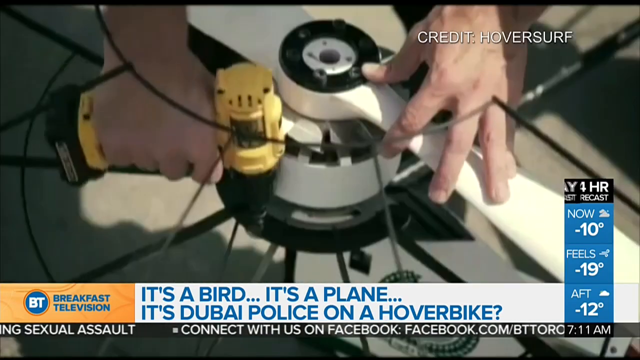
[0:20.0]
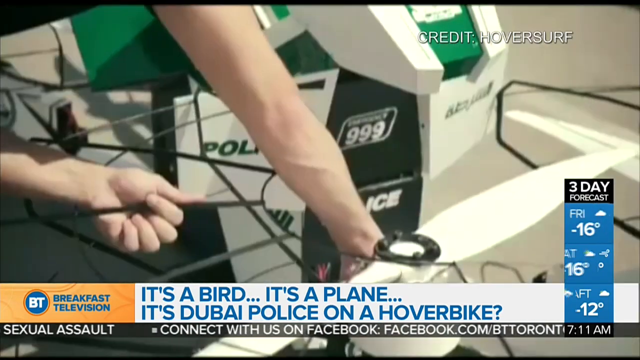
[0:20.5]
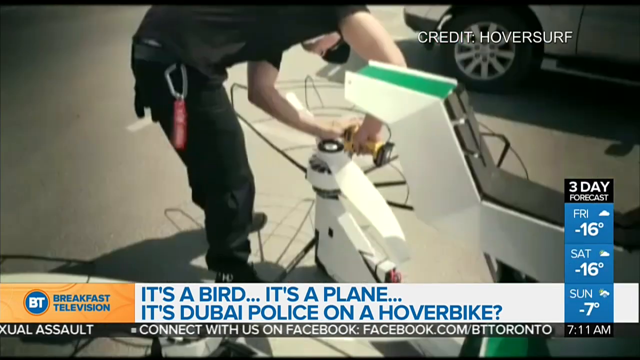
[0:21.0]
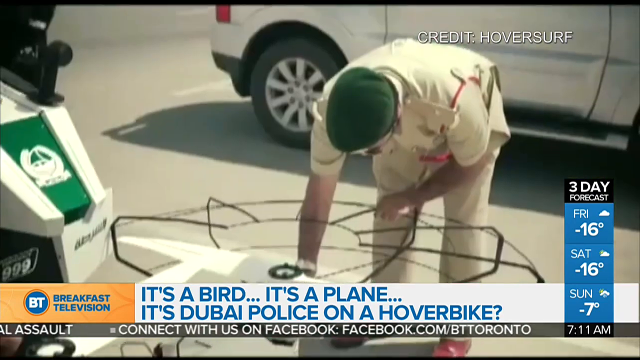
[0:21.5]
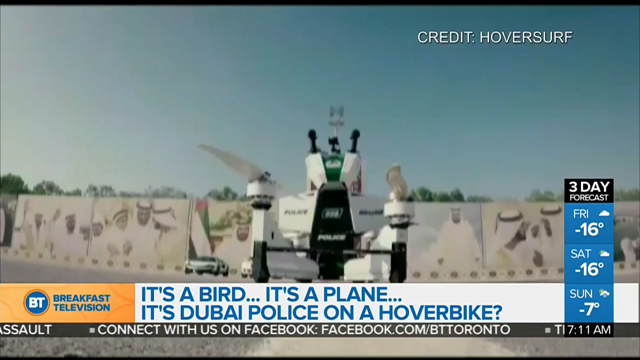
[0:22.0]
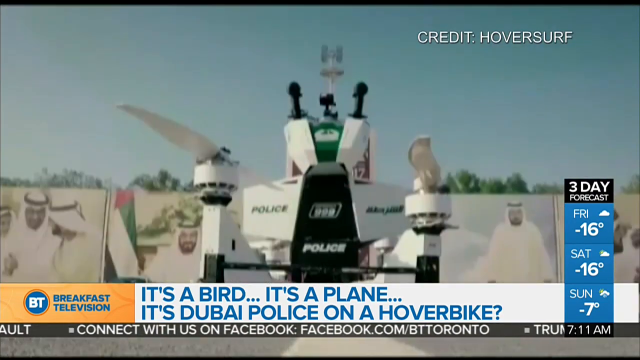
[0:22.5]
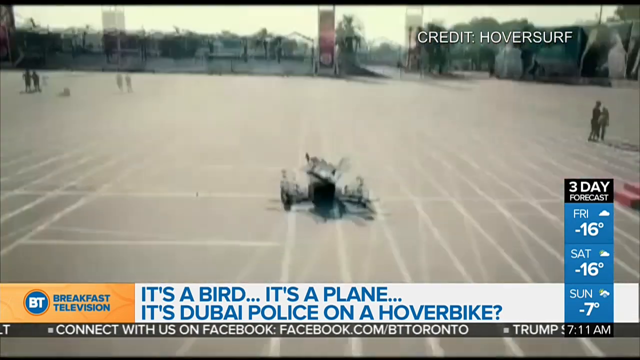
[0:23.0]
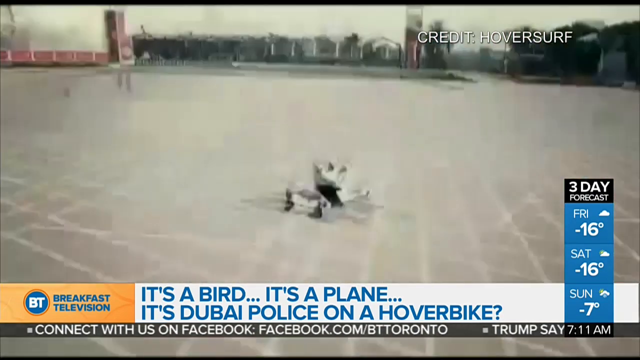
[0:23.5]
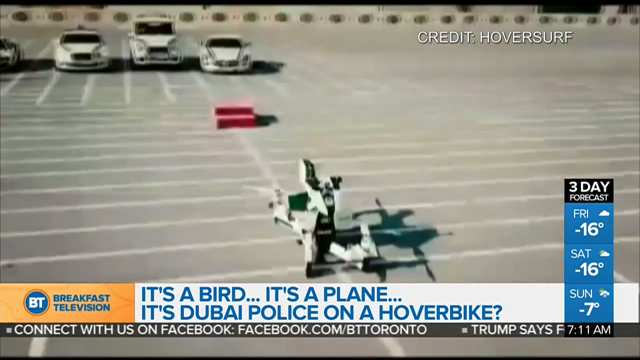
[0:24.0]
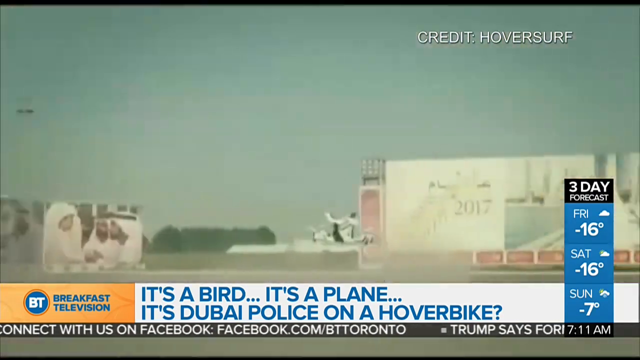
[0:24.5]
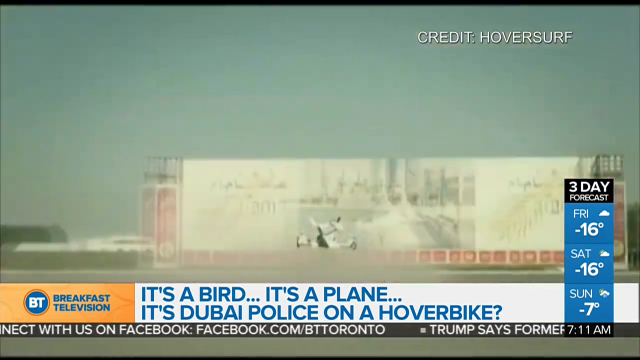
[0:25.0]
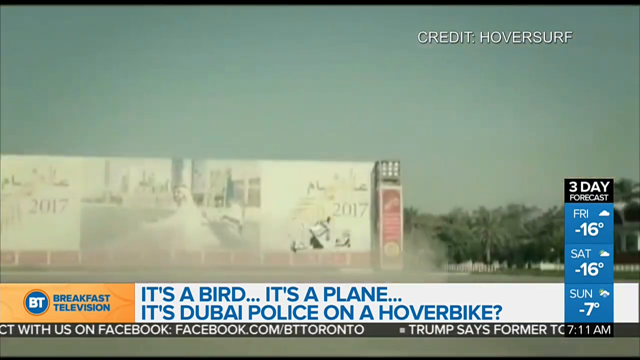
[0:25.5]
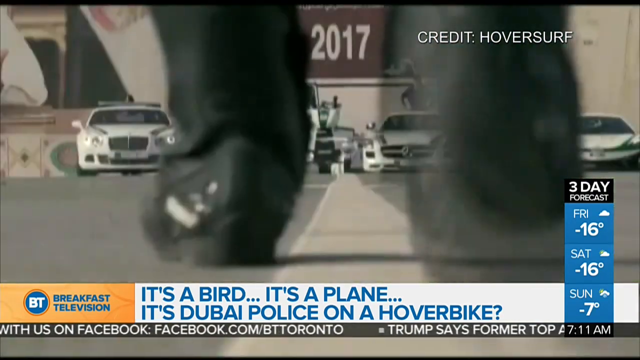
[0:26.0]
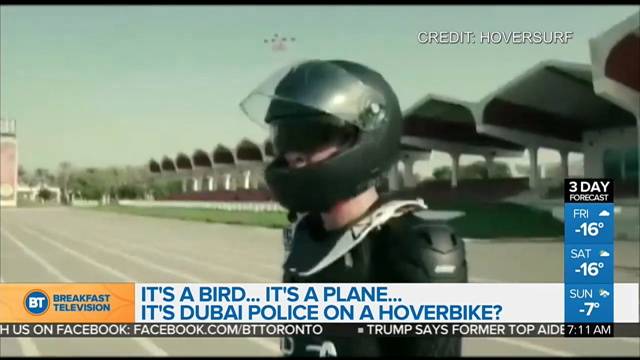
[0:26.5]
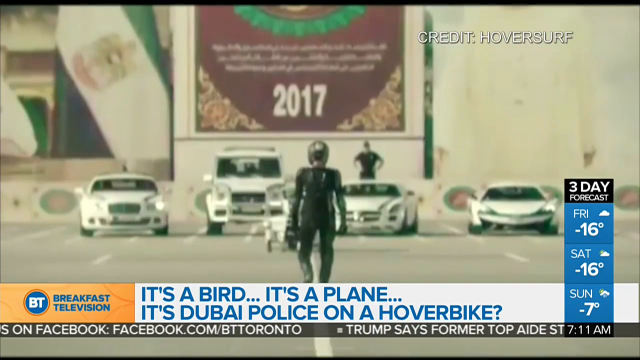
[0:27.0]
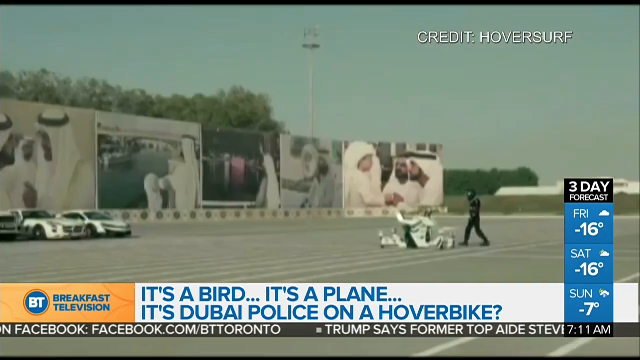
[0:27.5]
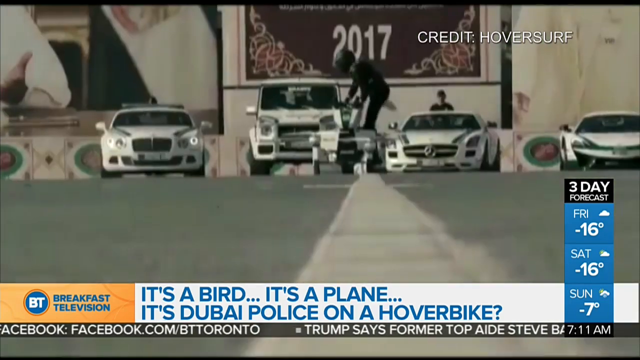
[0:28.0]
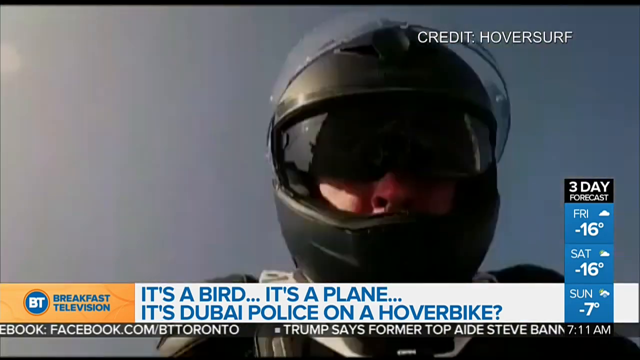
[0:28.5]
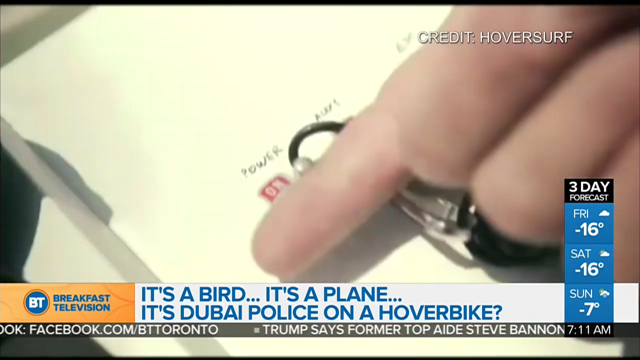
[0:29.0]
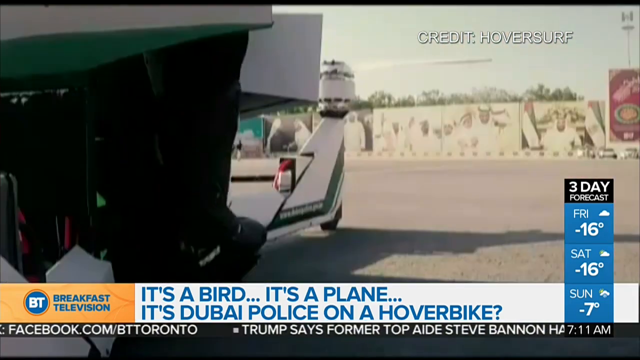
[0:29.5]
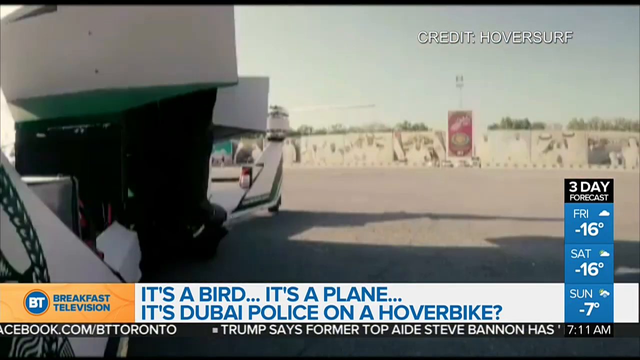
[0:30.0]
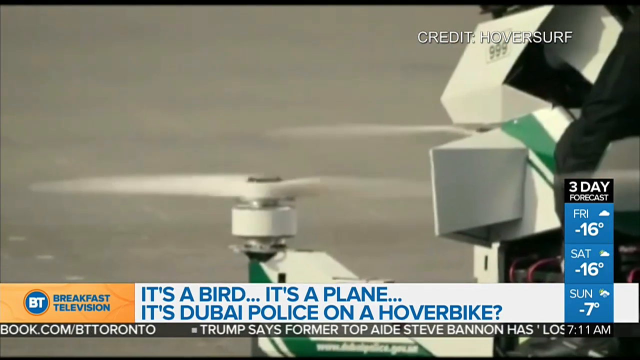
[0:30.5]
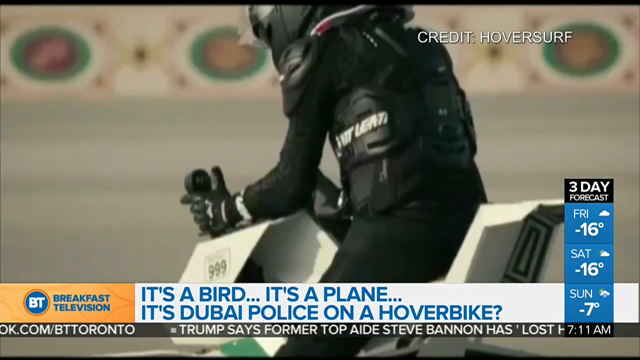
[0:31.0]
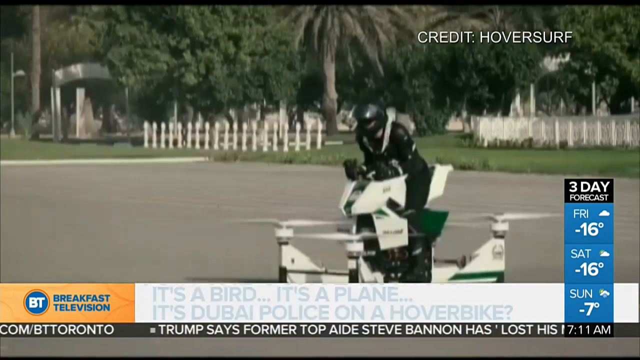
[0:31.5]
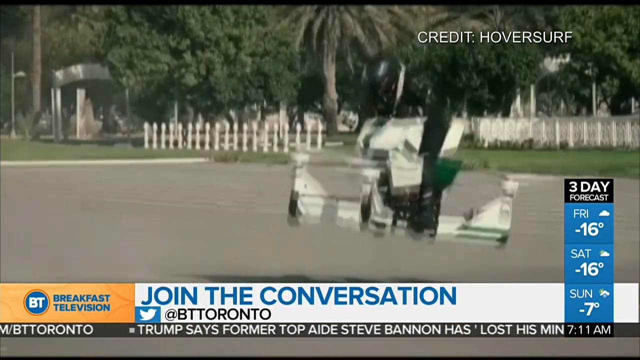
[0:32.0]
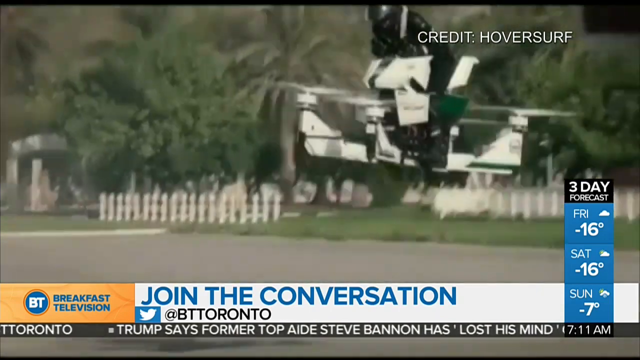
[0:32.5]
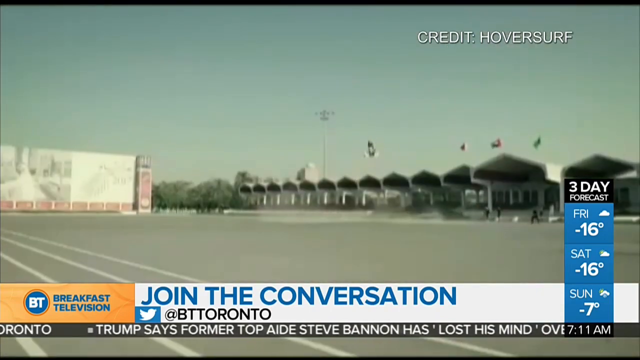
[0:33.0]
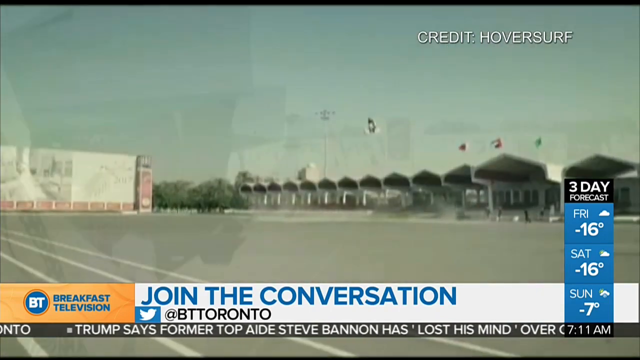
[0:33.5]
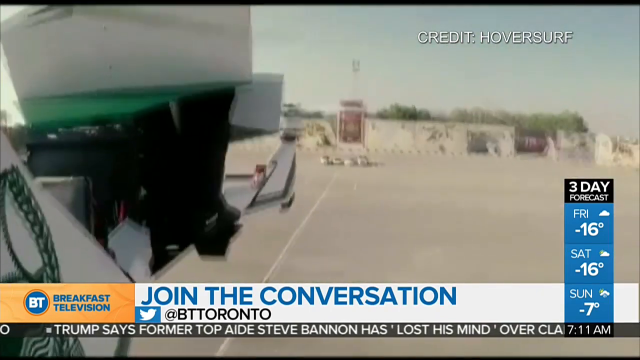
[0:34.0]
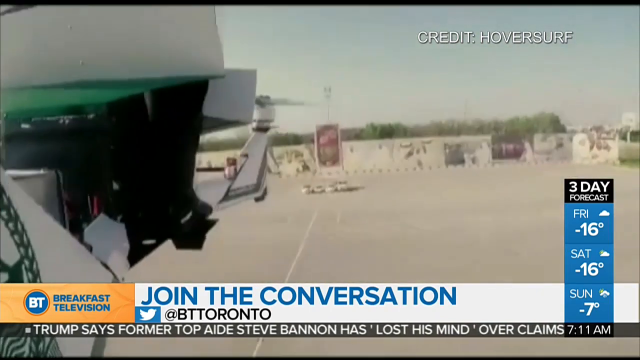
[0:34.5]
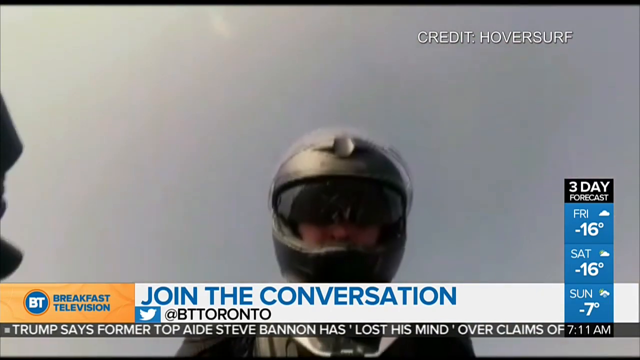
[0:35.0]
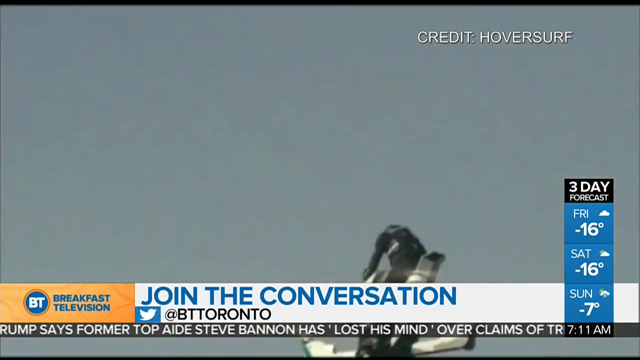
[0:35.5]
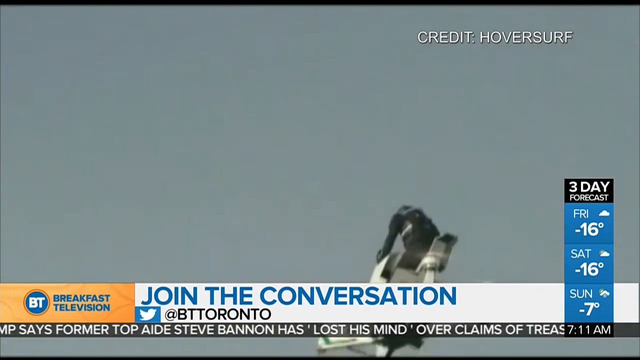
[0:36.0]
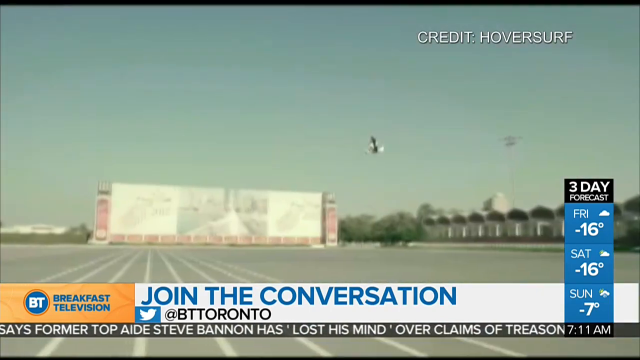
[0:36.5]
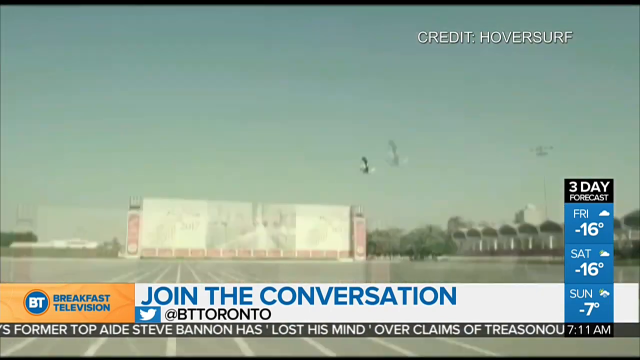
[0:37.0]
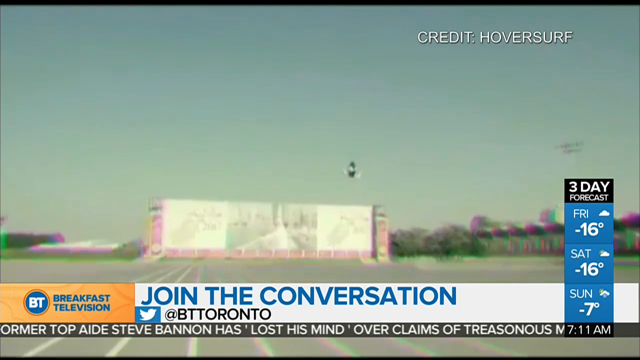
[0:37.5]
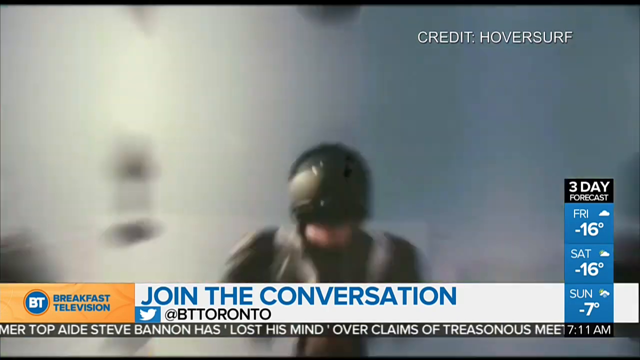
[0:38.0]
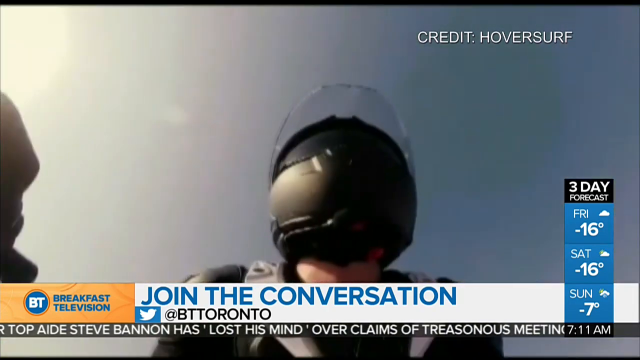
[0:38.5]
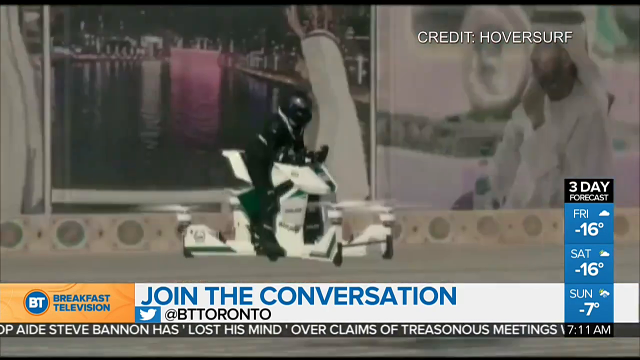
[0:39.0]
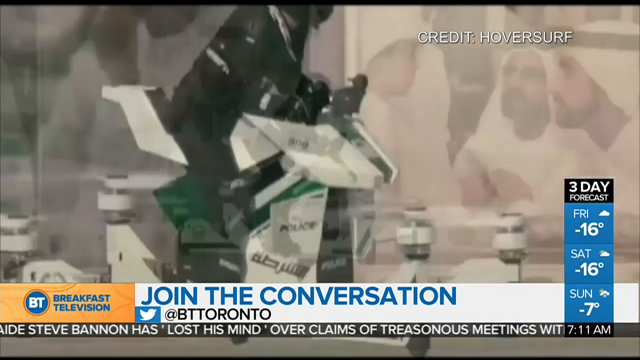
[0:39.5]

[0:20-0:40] Someone's hand tightens a few screws on the hoverbike, and the headline at the bottom of the screen reads "it's a bird..., it's a plane..., it's Dubai police on a hoverbike?" The drone-like structure is the hoverbike. A man in a black T-shirt and black trousers tightens a few screws on it. Later, a Dubai policeman in a khaki shirt, khaki trousers and a green cap inspects the hoverbike. A picture of the hoverbike appears at the center of the screen, followed by a zoom shot giving a 360 view of the hoverbike, with a few cars, maybe four or five, in the background. The hoverbike is then shown flying by itself. Then someone wearing something similar to a Formula One suit, a helmet and a black safety suit sits on the hoverbike and rides it through the air.